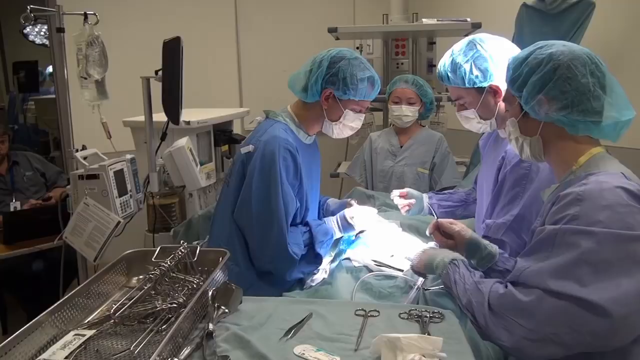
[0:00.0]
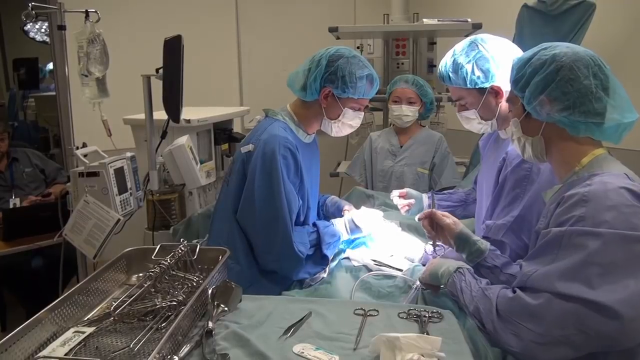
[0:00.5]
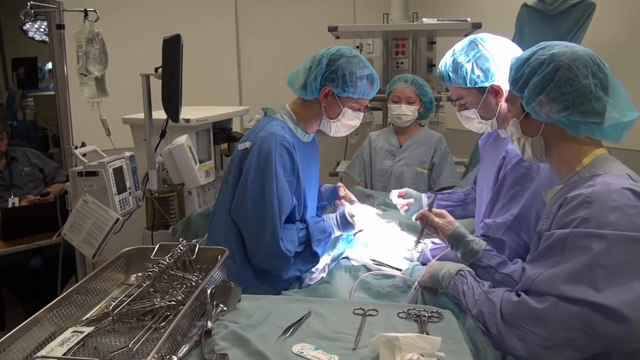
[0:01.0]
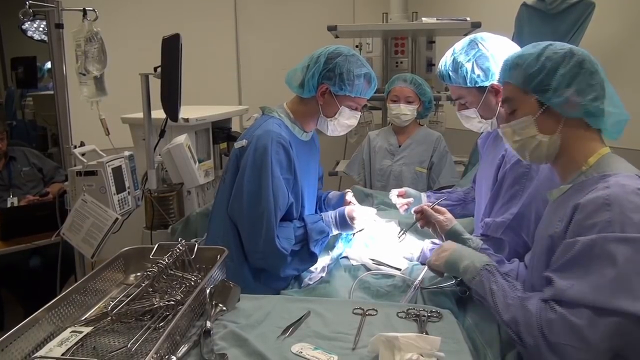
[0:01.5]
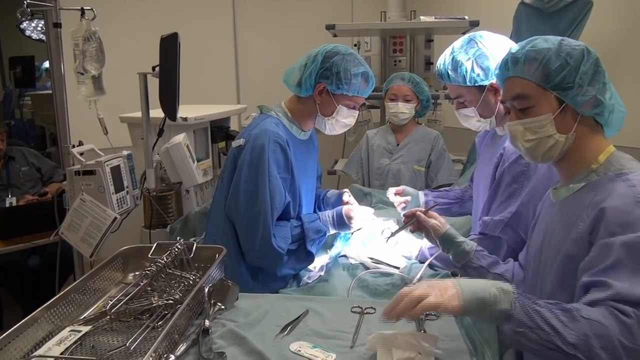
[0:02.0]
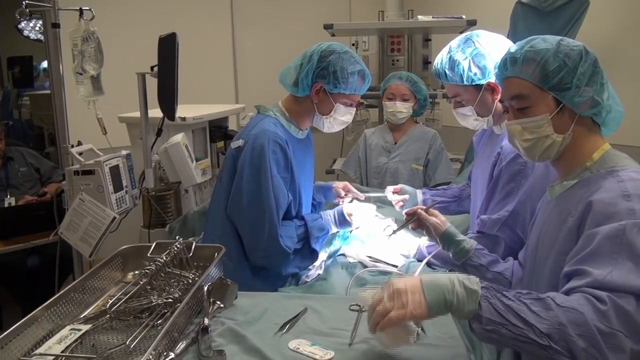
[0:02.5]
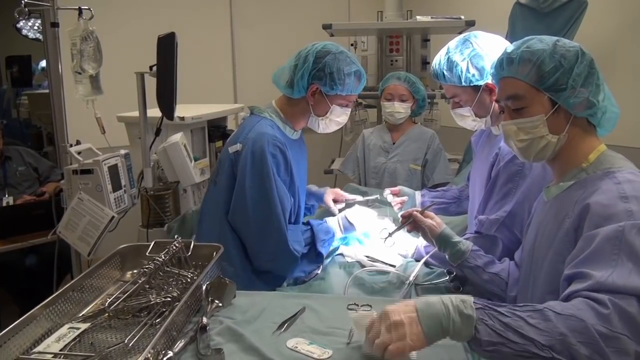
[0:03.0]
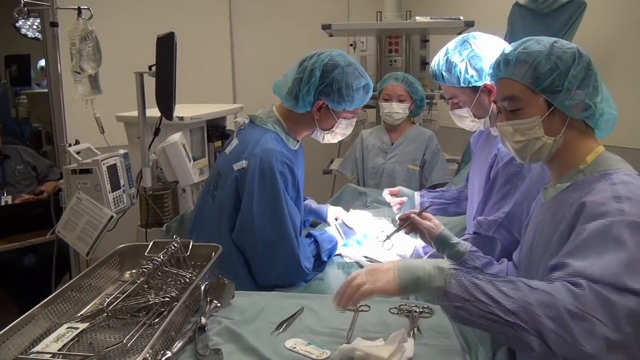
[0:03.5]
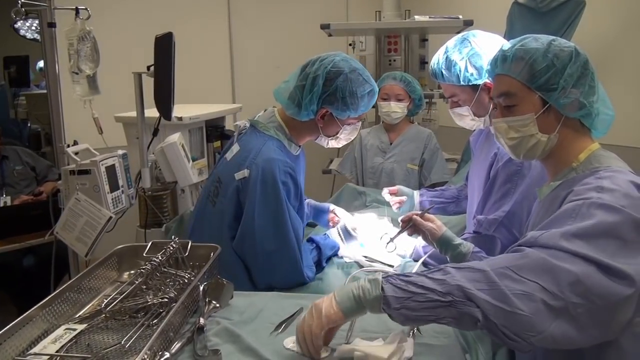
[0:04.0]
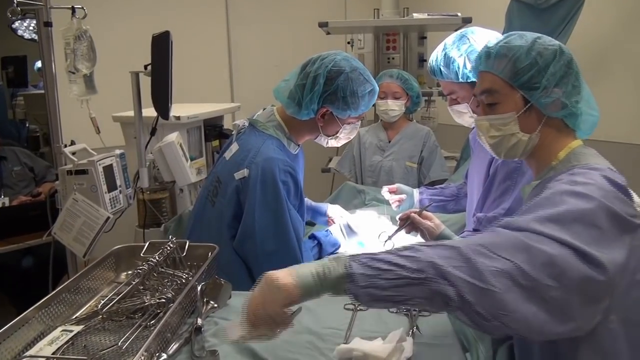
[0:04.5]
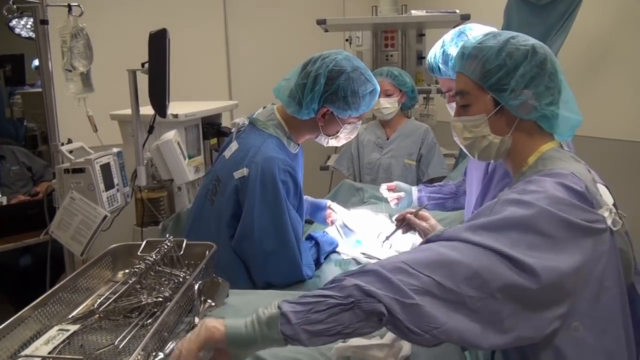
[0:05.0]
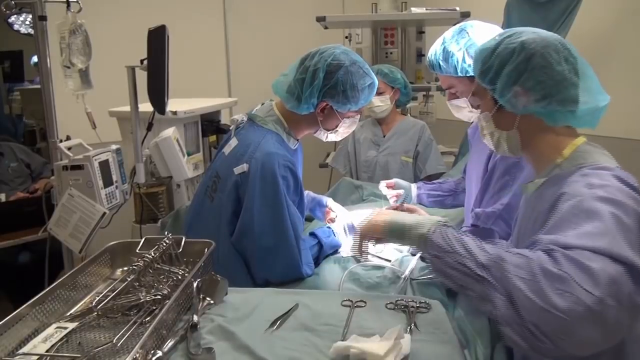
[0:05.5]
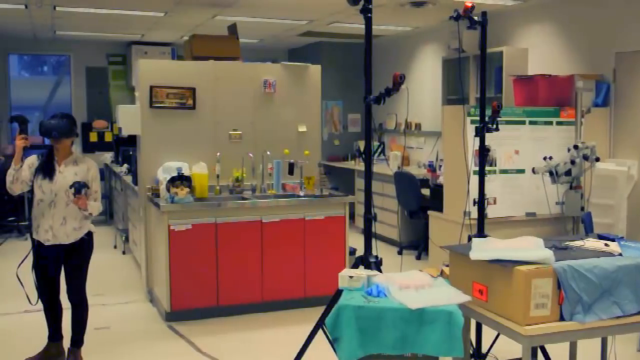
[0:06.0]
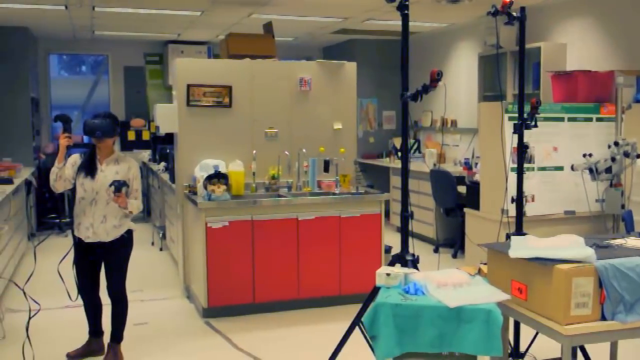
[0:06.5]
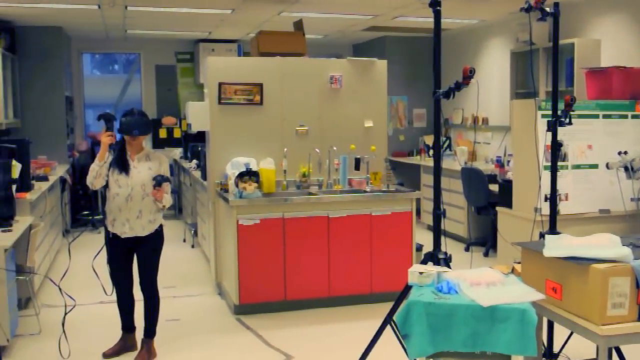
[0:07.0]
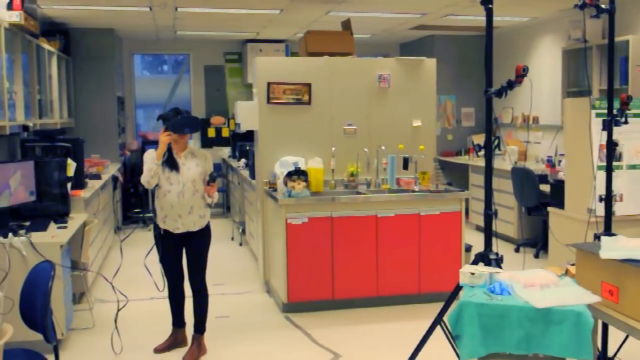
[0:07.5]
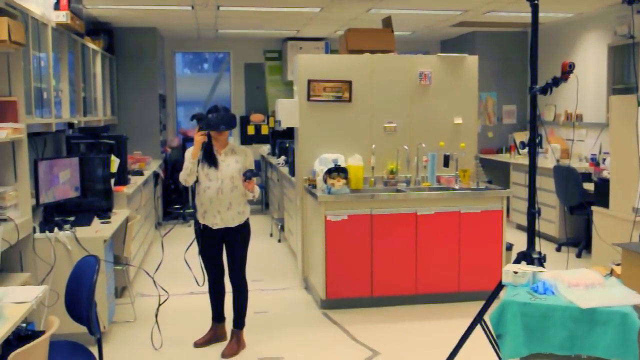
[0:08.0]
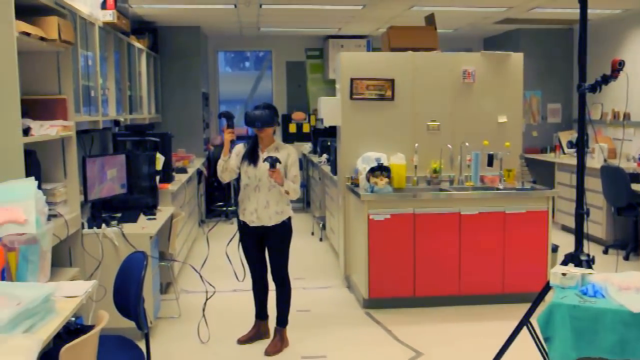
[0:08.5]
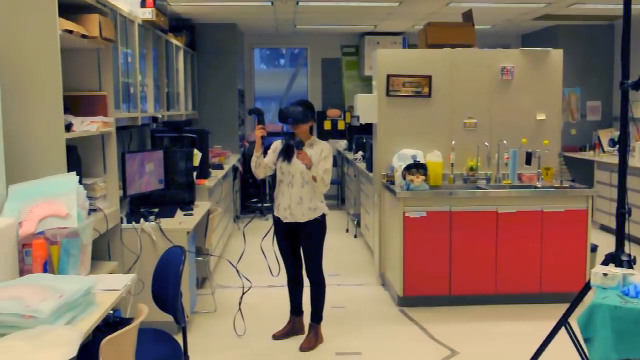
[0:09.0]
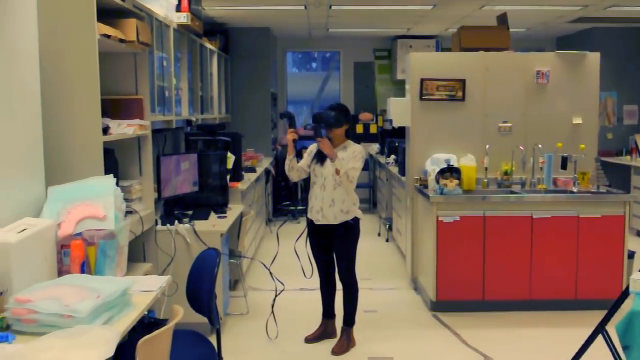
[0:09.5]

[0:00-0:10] An operation is in progress, with four medical personnel surrounding the operating table on which the patient is lying. A doctor on the left side of the table wears a white surgical mask over his face, a blue hair net over his hair and a blue surgical gown. He is bent slightly forward from the waist over the operating table, his neck bent slightly forward, looking down at the patient. He uses both hands on the patient as he operates, his arms down close to his sides and bent at the elbow, his fingers grasping the surgical equipment. A bright light shines down on the table as the surgeon performs the operation. A medical assistant on the right side of the frame holds a piece of medical equipment in his right hand between his thumb and forefinger, then reaches to his left with his left hand to pick up a piece of white gauze, still holding the equipment in his right hand. The video then shows a woman standing in a room that looks like a laboratory or some sort of room outside a surgical area. She is holding a camera and appears to be videotaping what is going on in the room.